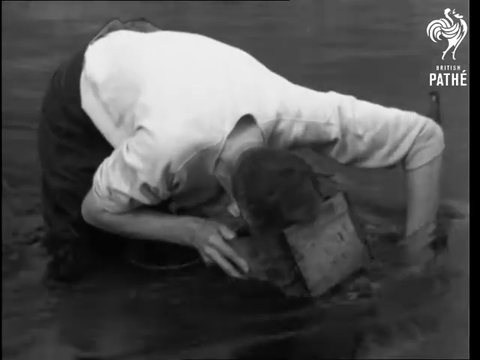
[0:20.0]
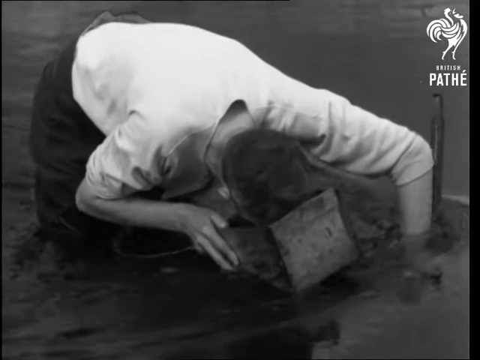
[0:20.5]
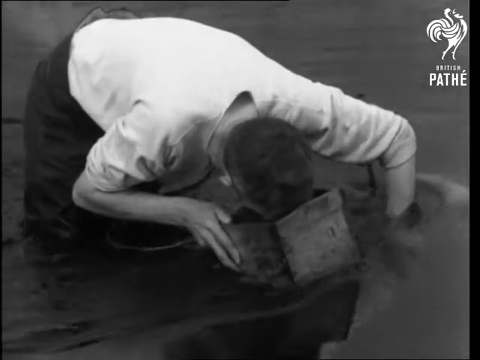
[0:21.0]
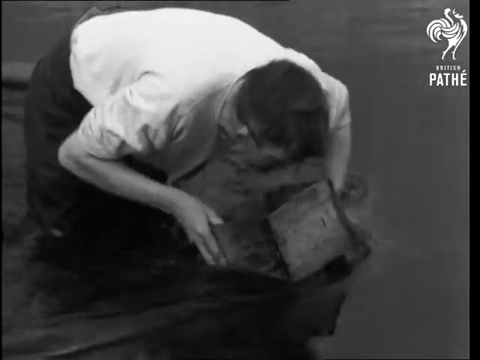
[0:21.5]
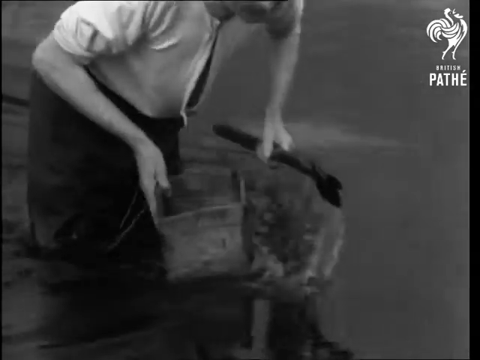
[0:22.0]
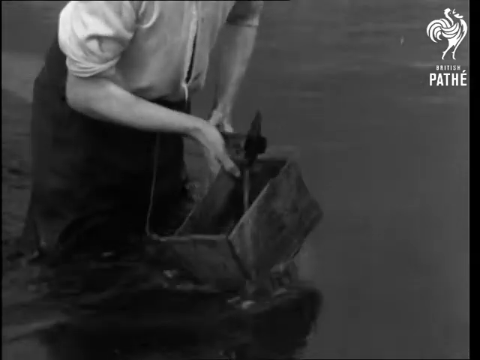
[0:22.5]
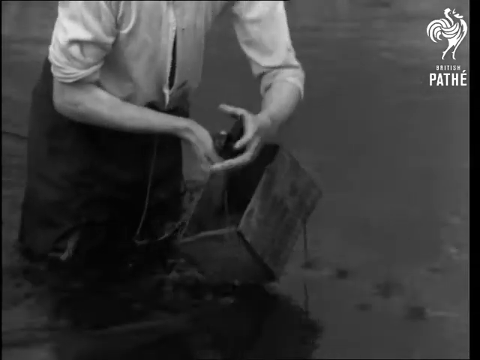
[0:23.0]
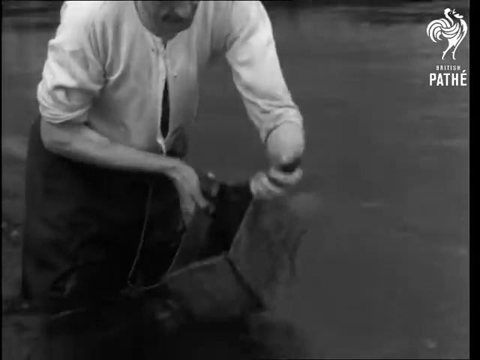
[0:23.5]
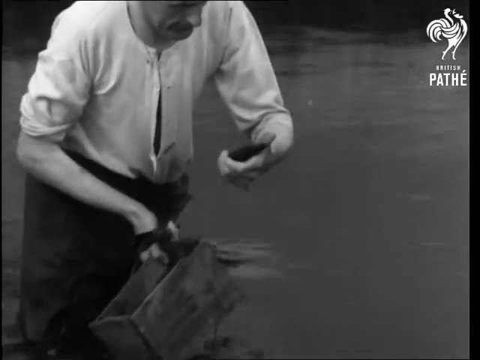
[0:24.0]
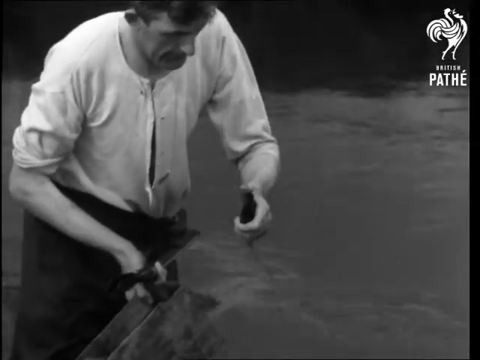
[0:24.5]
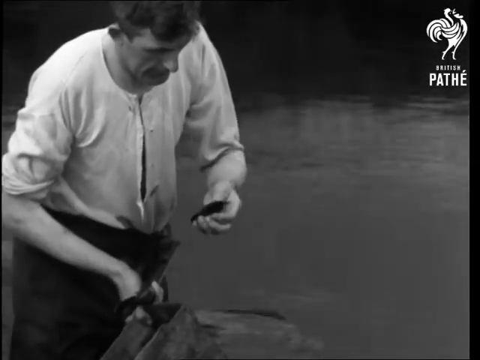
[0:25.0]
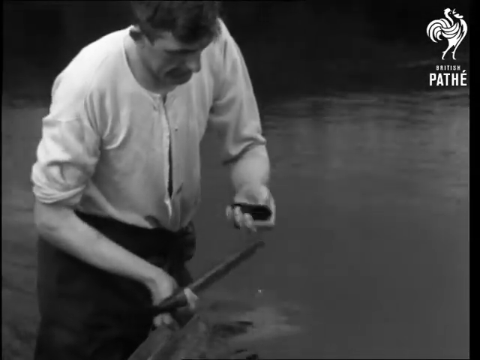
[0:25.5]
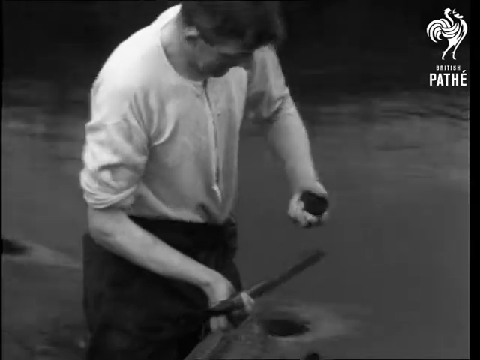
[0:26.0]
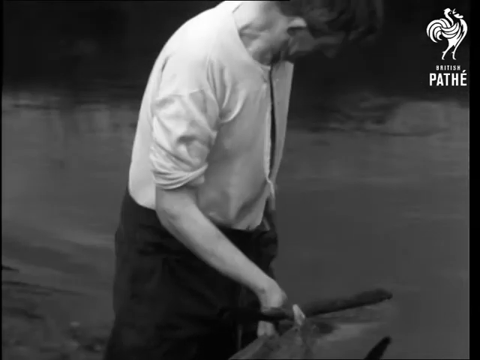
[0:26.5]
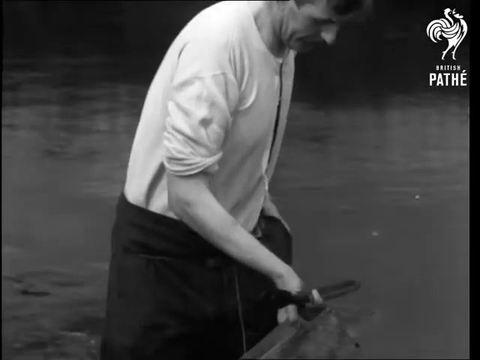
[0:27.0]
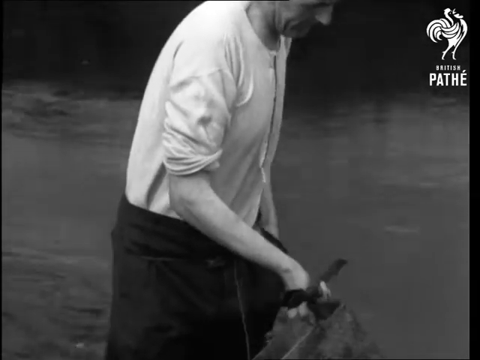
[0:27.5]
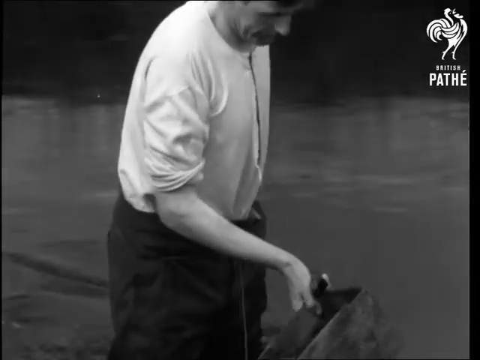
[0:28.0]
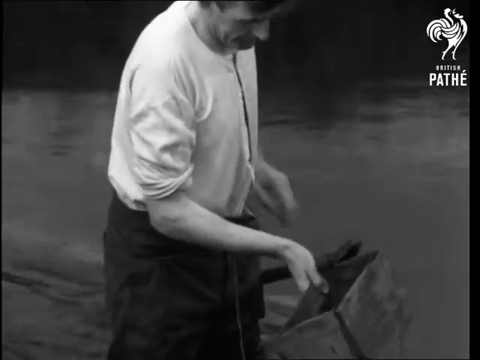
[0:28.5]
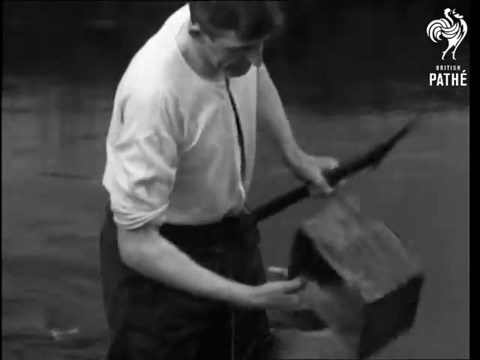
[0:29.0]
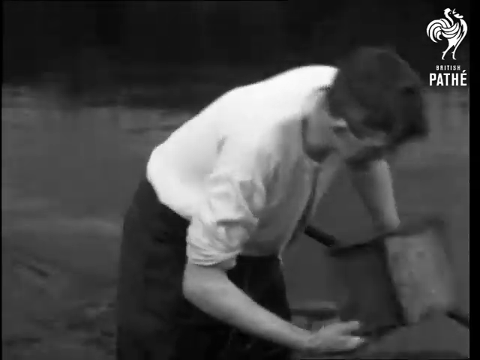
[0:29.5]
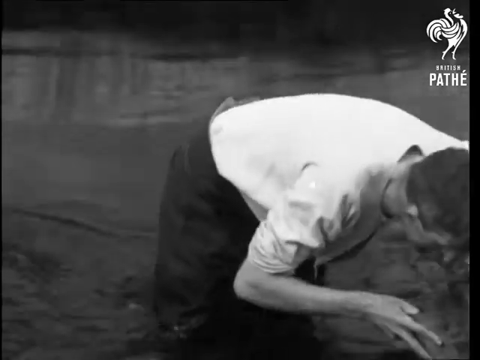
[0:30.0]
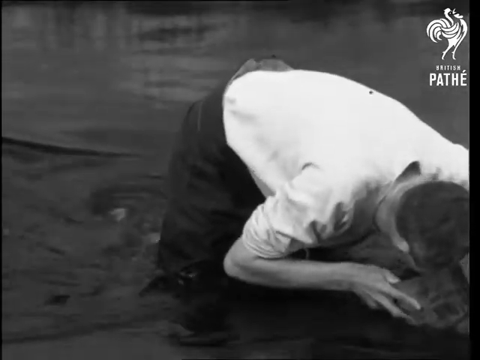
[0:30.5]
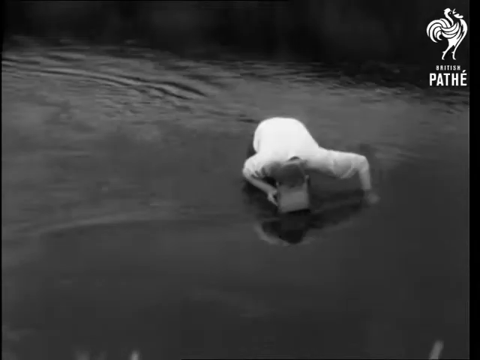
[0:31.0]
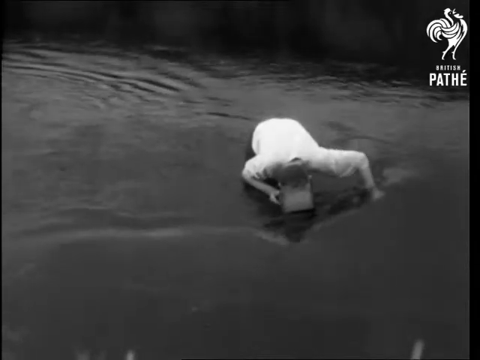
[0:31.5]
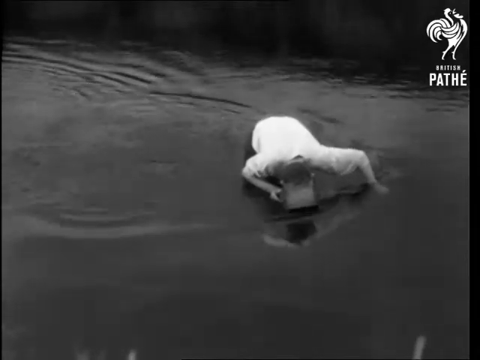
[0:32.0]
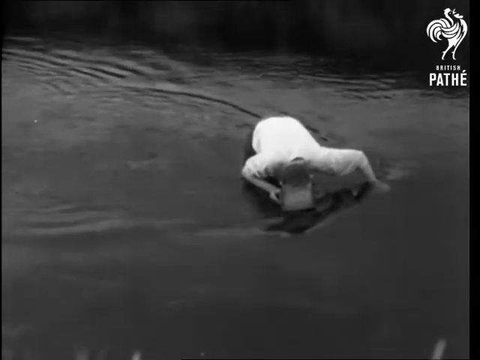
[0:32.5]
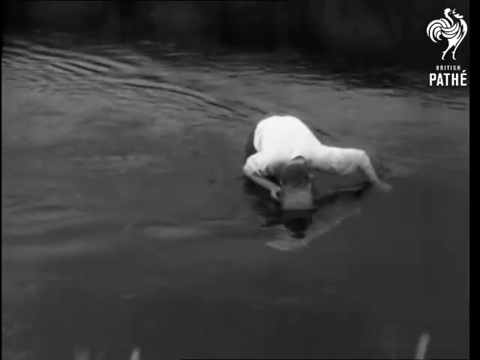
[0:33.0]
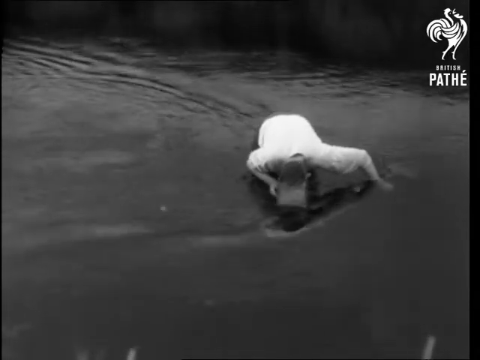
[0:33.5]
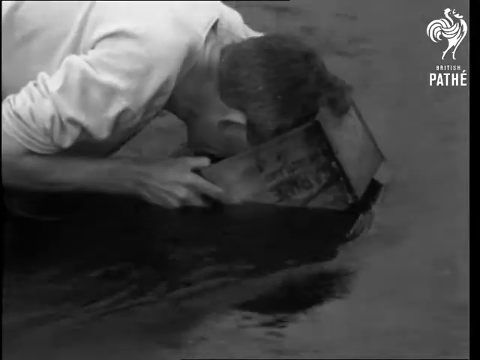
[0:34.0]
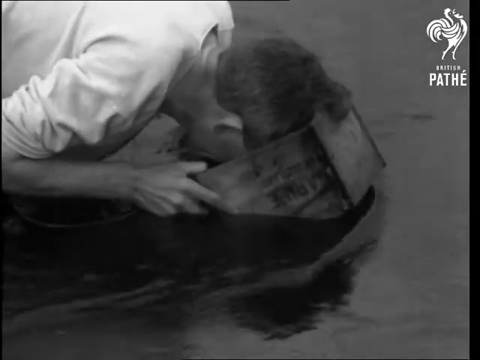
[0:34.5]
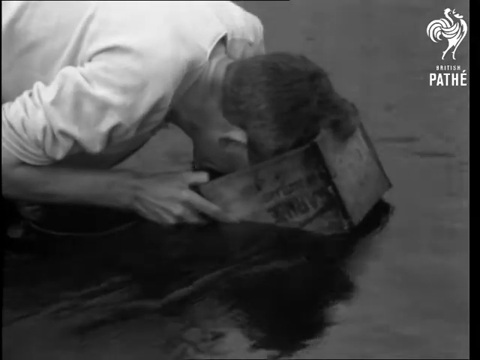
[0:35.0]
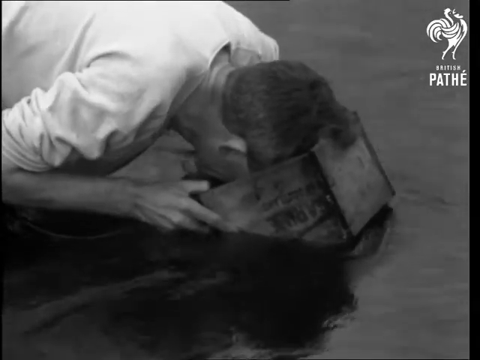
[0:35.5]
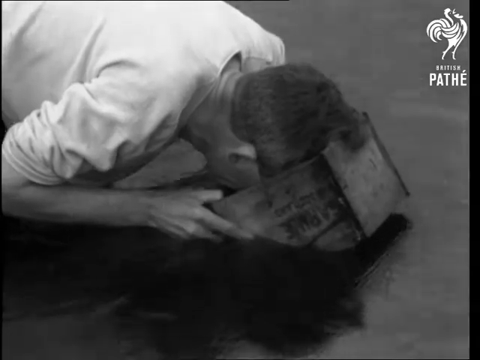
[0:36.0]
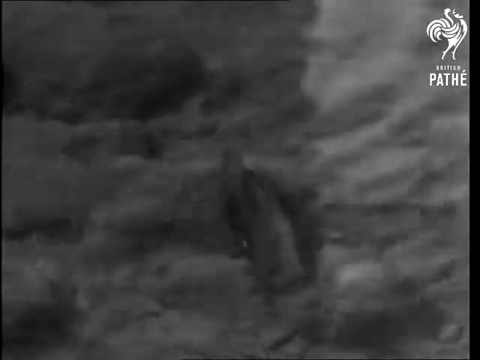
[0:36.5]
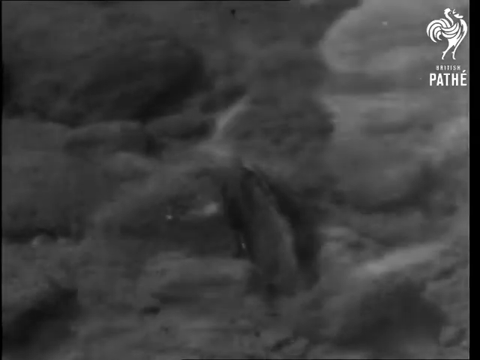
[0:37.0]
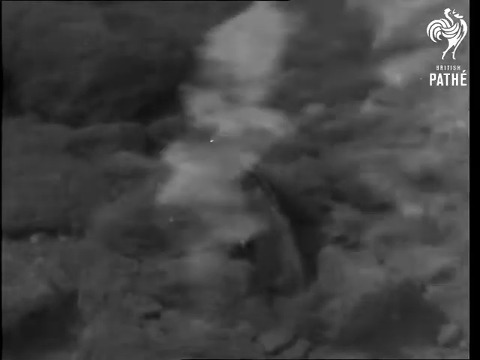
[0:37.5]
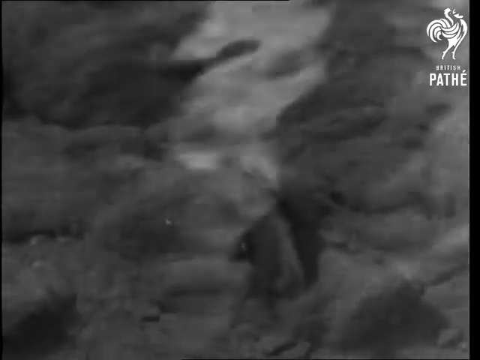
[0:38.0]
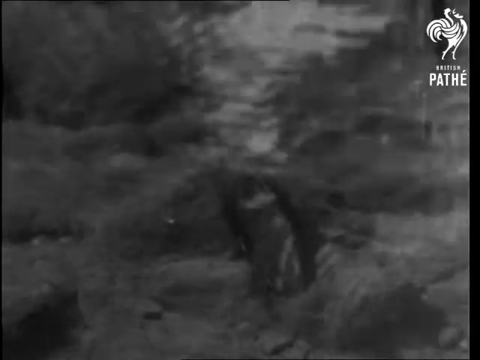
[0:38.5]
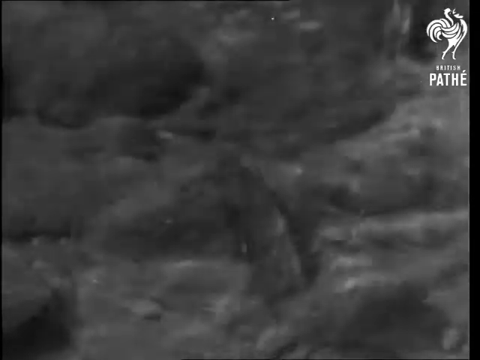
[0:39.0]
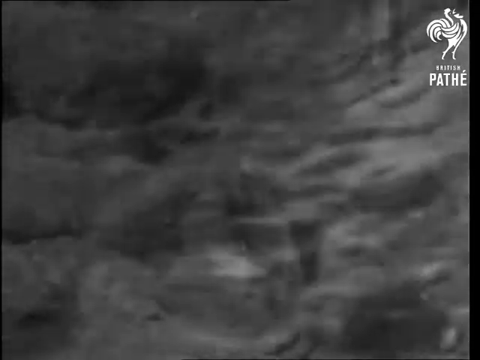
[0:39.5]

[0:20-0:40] A man wears pants that are possibly waders and a white long-sleeved shirt rolled up to his elbows. In his right hand he holds a wooden box slightly bigger than his head. He stands in the water looking into the box, which likely has a plastic or glass plate on the other side so he can see down to the bottom underneath the water. In his left hand he holds the handle of some kind of digging tool, made of either wood or metal, and moves it around; it looks like a device for picking something up. He pulls it out of the water and stands upright, and a clam is on the other side of it. He pulls the clam off, looks at it, and puts it in his left pocket with his left hand; there is a big pocket on both sides. He grabs his tools again and looks back into the water. The water flows from right to left in the river, and the scene is apparently filmed by someone nearby on the shore. The camera then looks into the water as he digs for clams, showing a clam on the ground underneath the water, and then his tool, which looks like a wide open fork with two tongs.